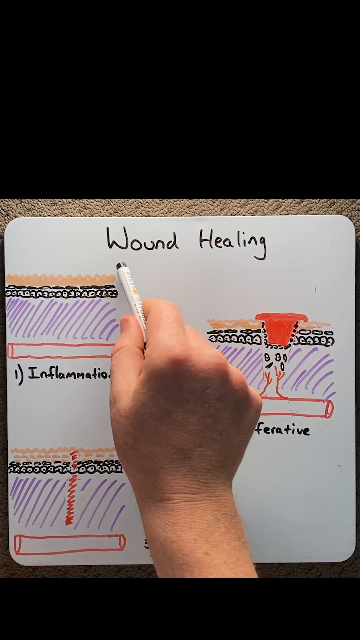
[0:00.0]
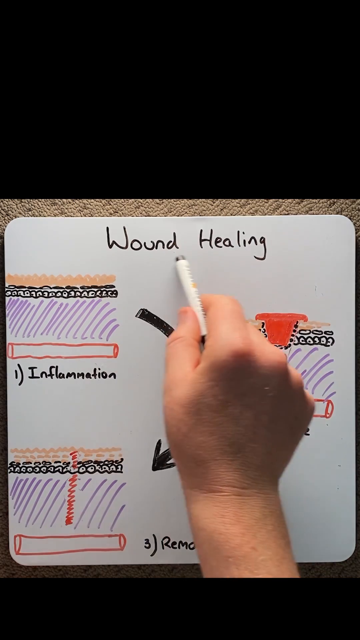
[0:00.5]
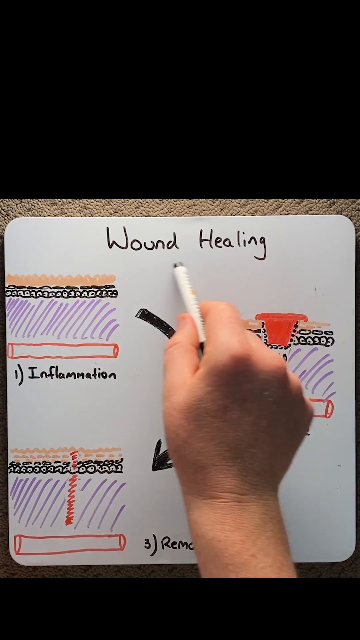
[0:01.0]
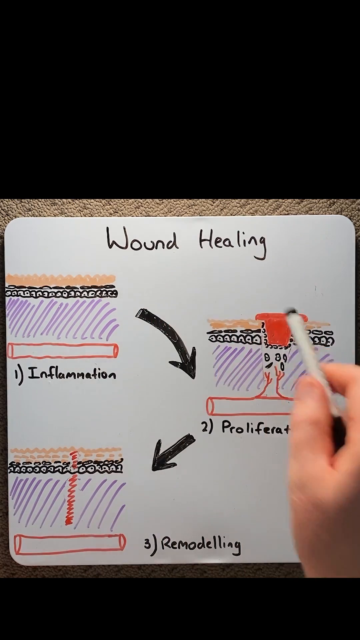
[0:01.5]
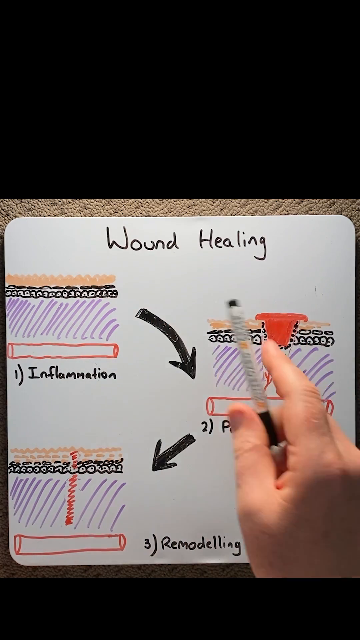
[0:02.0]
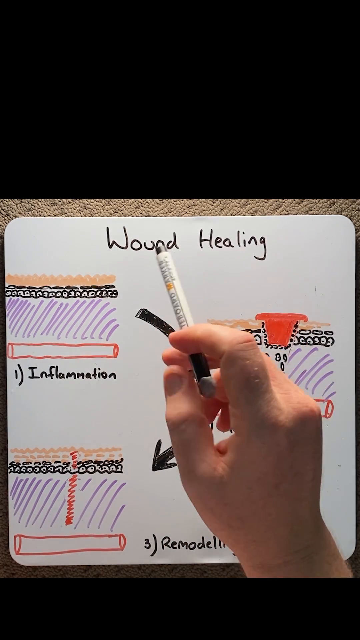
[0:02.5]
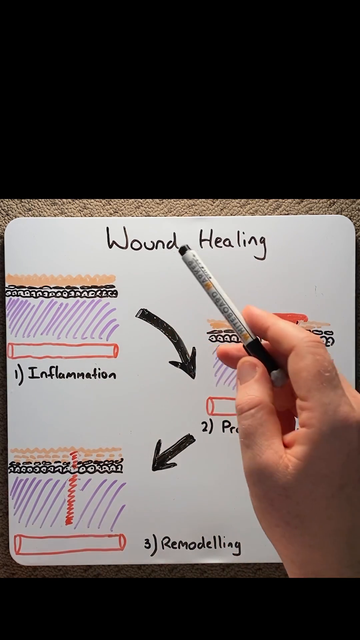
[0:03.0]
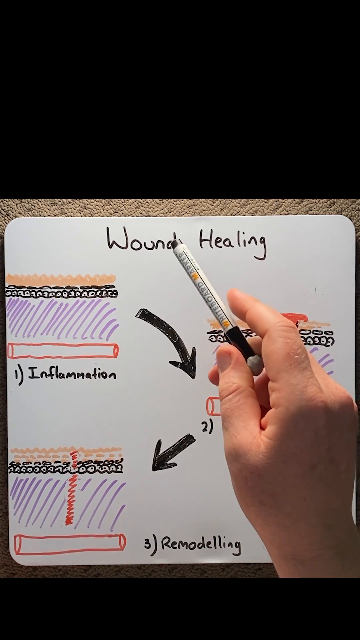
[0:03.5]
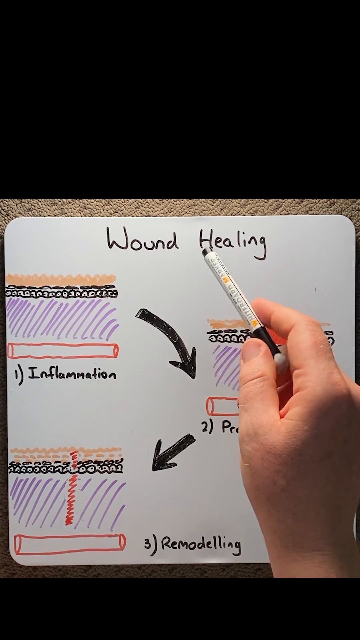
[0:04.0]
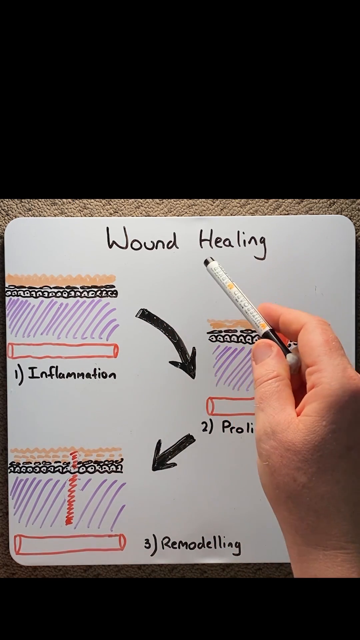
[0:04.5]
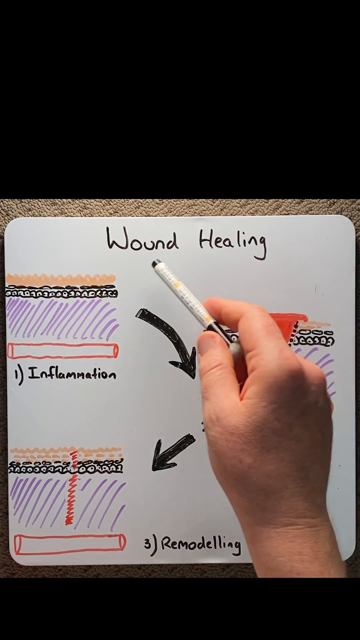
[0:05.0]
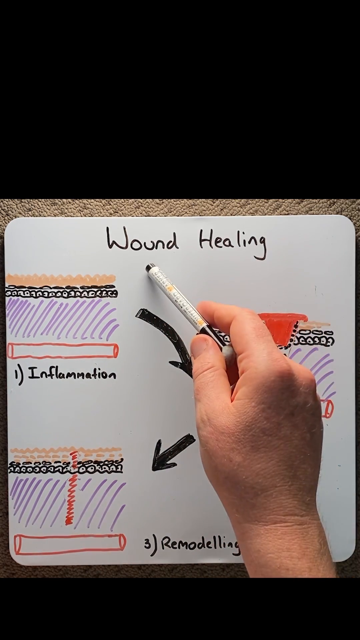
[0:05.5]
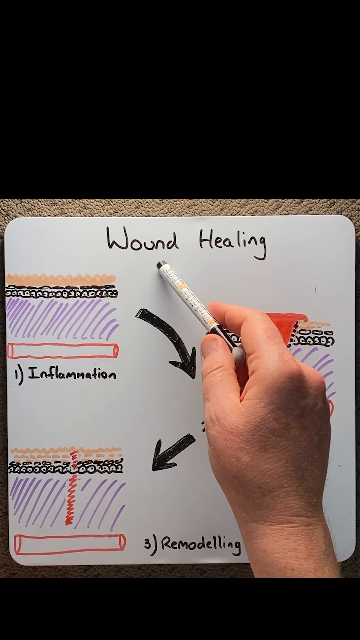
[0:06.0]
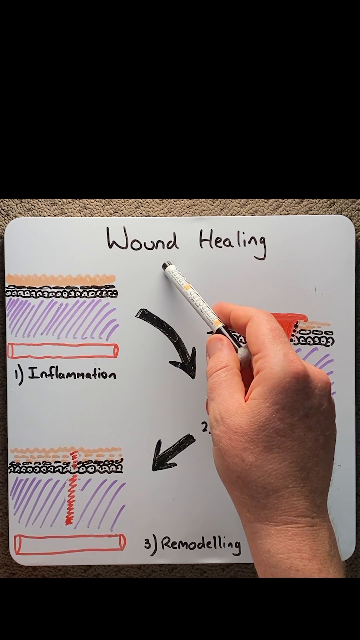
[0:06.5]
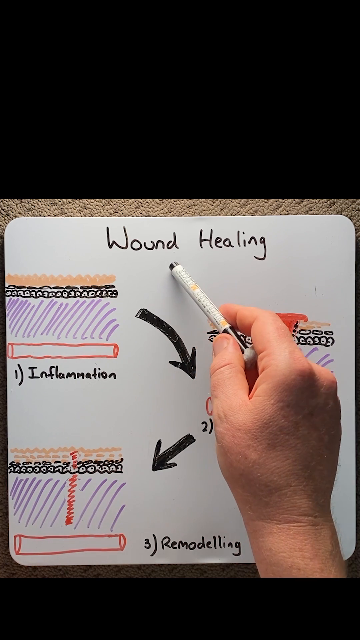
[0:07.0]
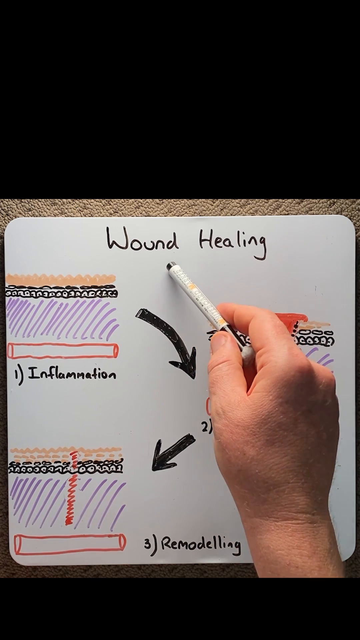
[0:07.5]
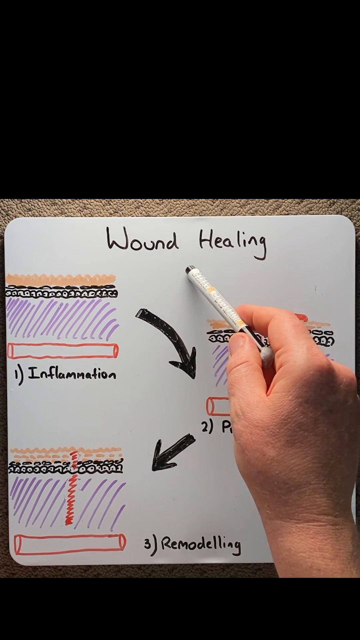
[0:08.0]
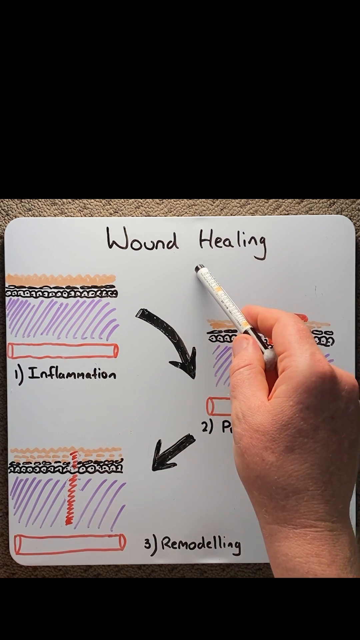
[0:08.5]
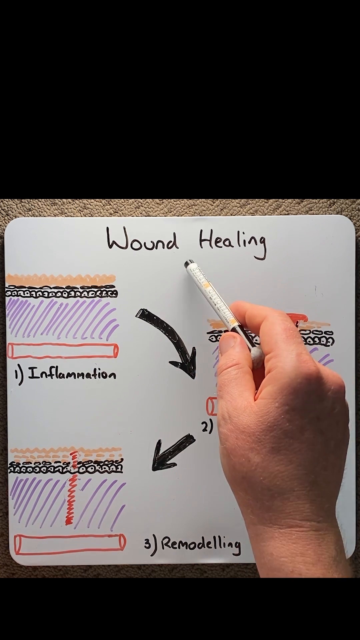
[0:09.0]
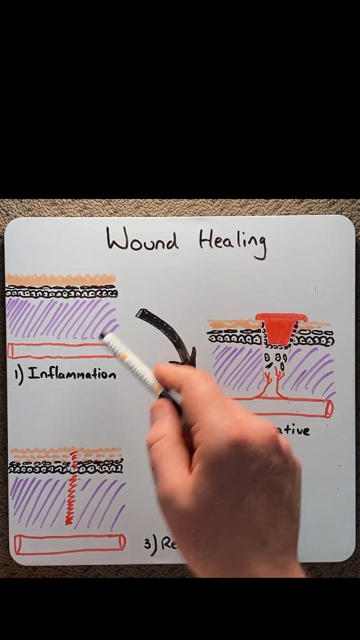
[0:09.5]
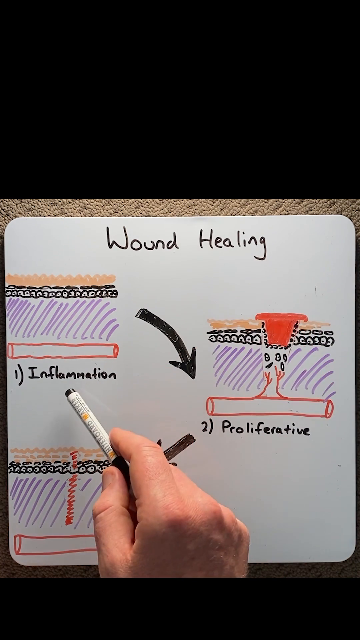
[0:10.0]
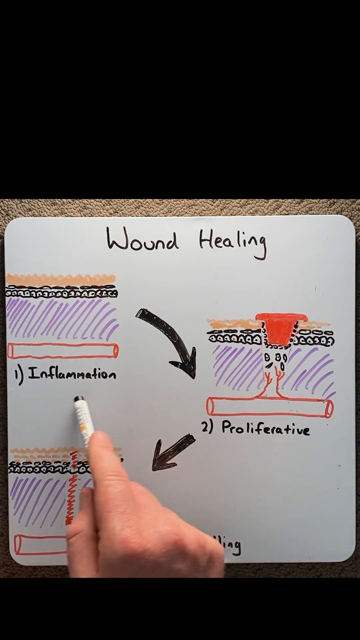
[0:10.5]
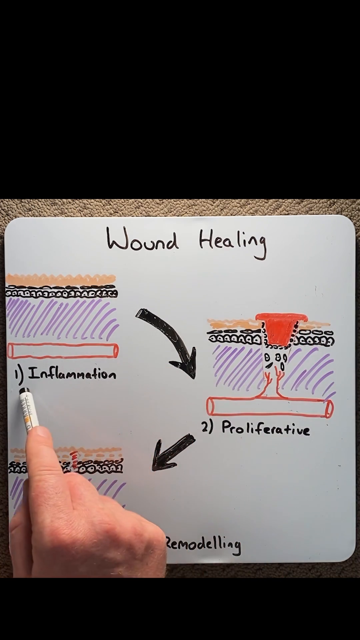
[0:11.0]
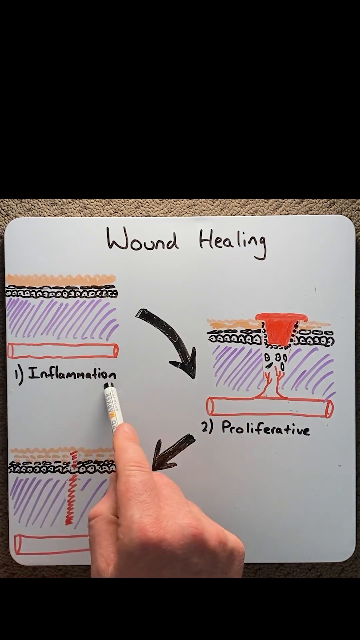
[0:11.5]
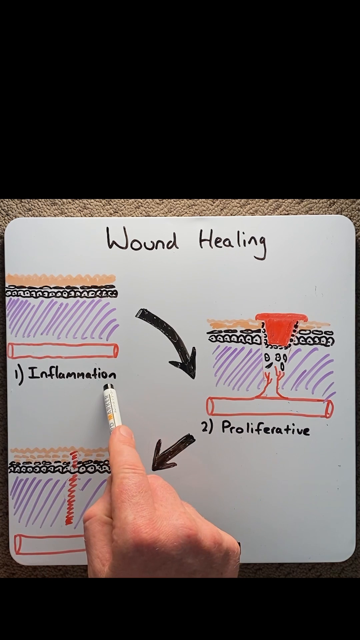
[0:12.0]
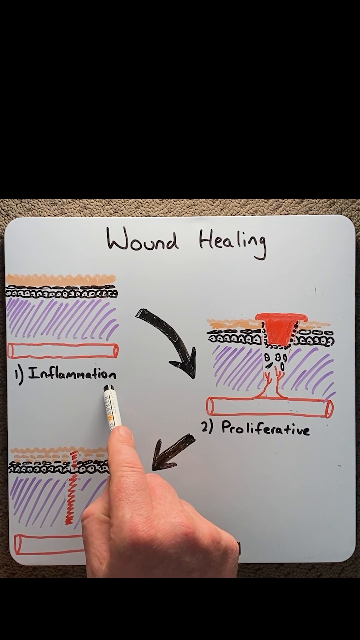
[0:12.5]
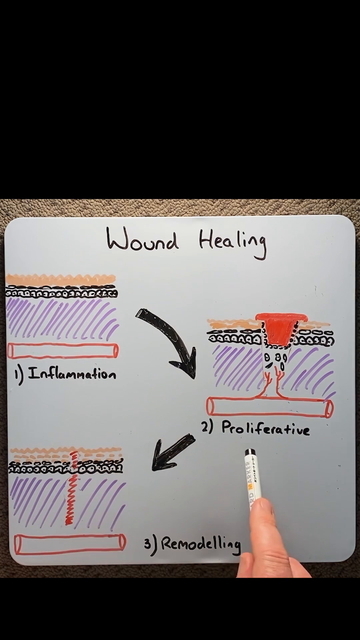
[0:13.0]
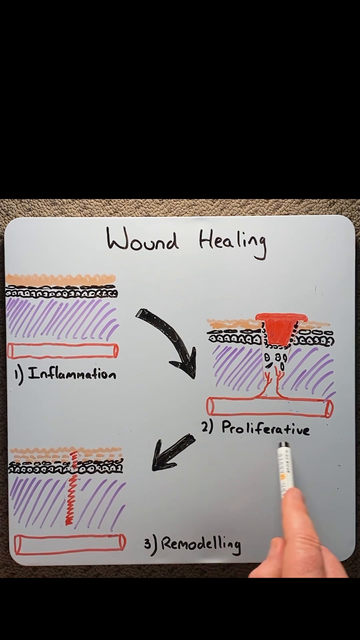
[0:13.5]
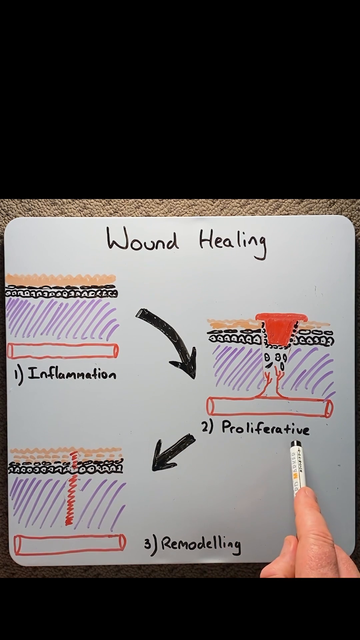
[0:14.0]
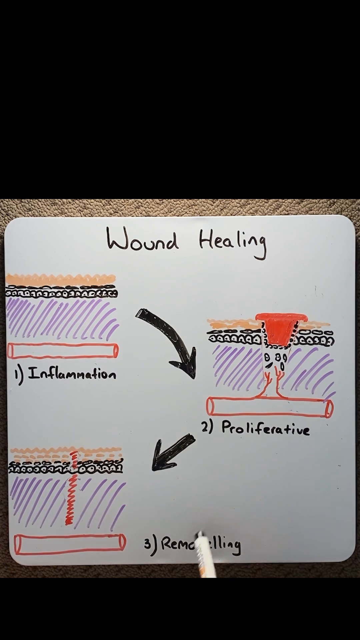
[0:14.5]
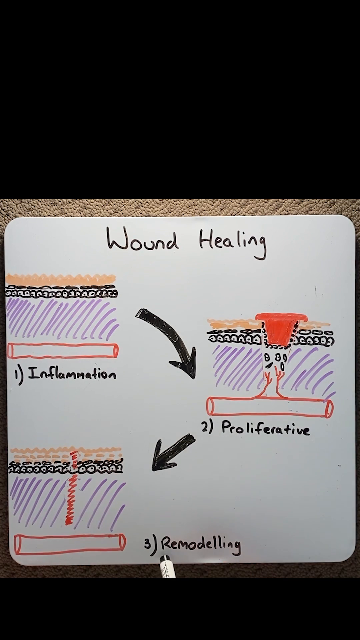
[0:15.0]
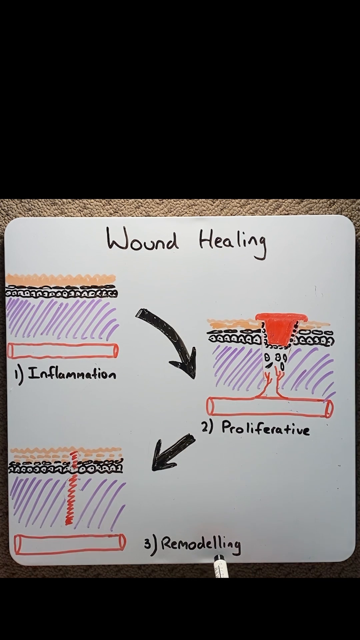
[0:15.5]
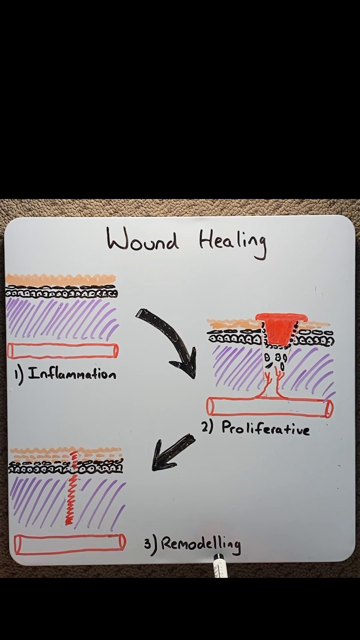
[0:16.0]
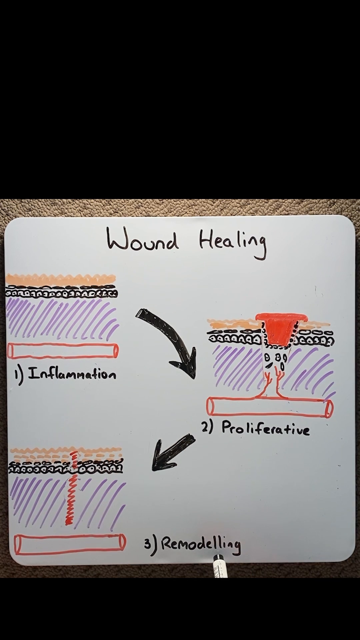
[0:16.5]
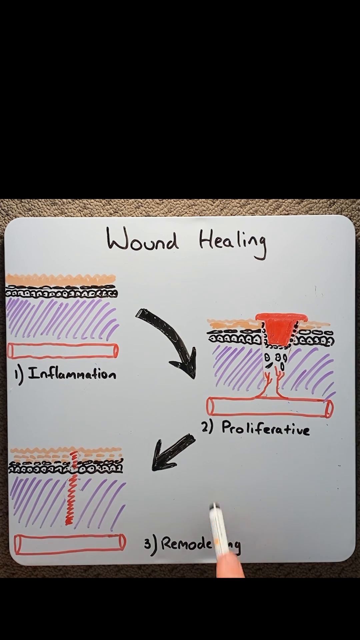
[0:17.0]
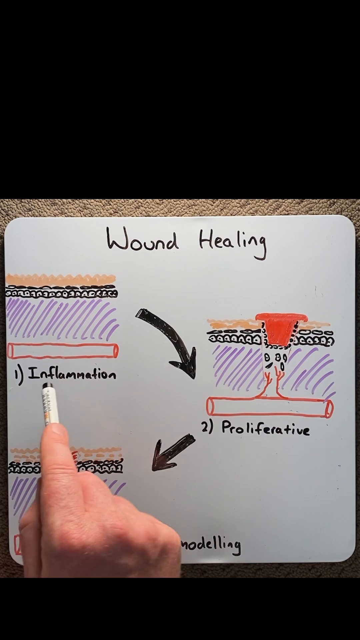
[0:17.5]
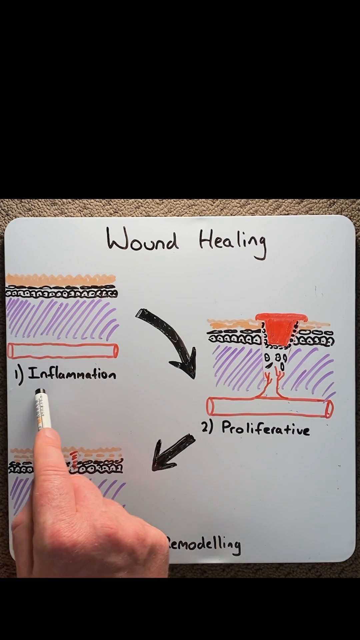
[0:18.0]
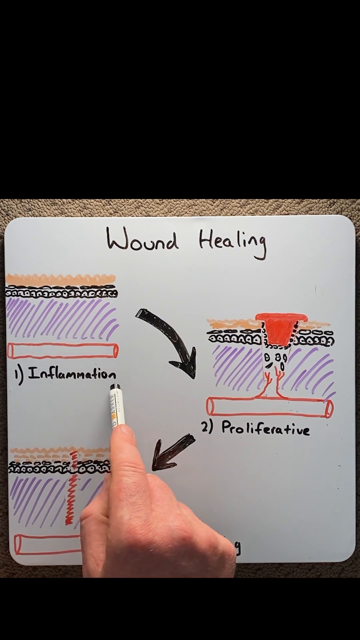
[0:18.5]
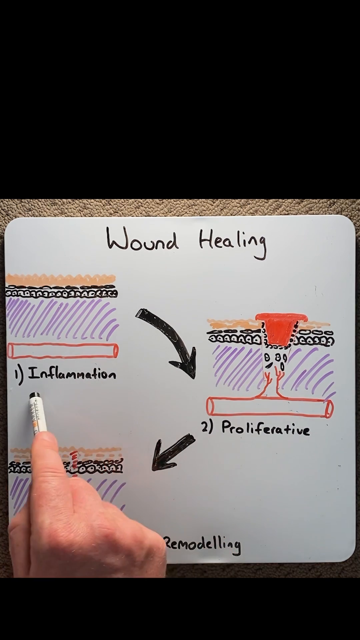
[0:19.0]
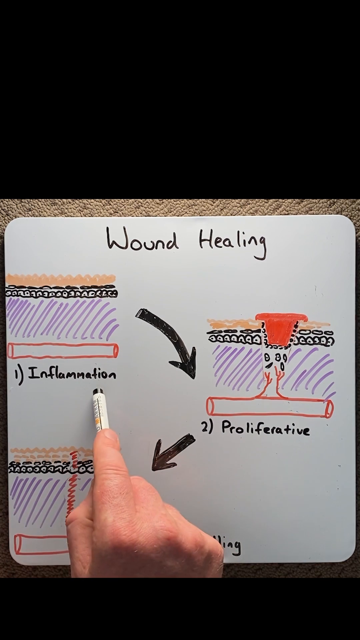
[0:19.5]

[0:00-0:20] The video shows a whiteboard drawing. A man holds a black marker in his hand and points to a board that says "wound healing." Three steps are laid out. The first is inflammation, illustrated in different colored markers. The next stage of healing is proliferative, which his hand is covering, and there is a drawing of it. The third is called remodeling. Each step of the wound healing process is modeled on the whiteboard in different colored markers, with arrows pointing to each step in sequential order until the wound reaches the remodeling phase. The man's hand is fairly chunky, and judging by the color of his skin he seems to be a white male. It looks like he is talking as he points to each step. Only his hands on the whiteboard are visible.